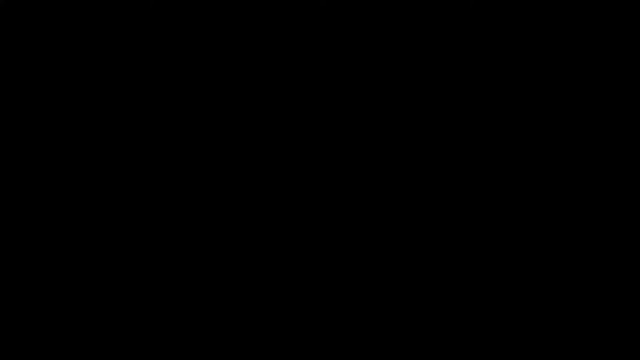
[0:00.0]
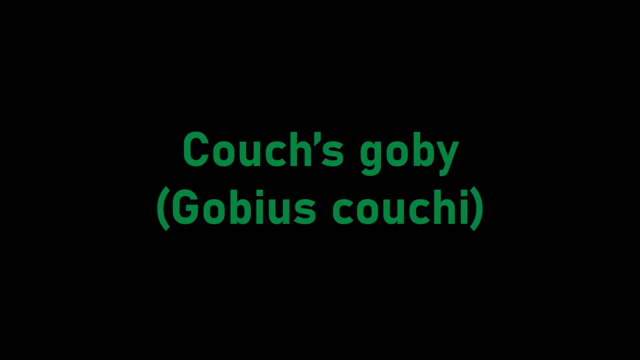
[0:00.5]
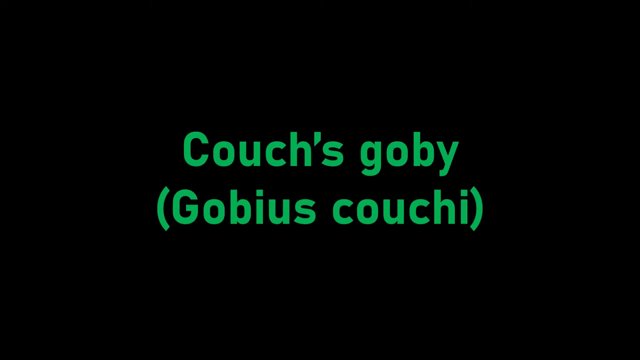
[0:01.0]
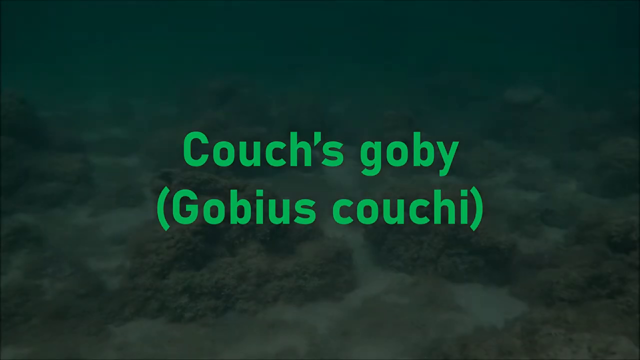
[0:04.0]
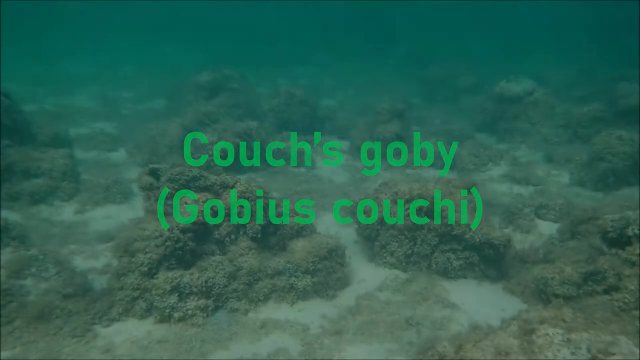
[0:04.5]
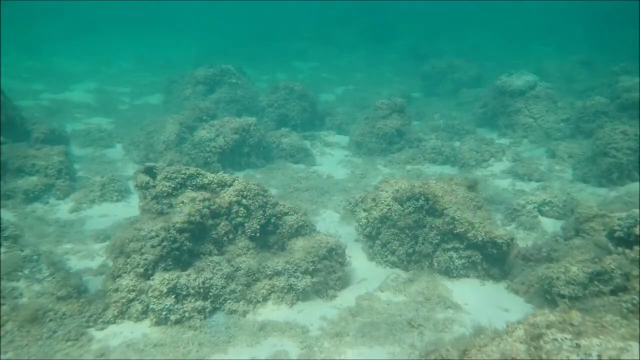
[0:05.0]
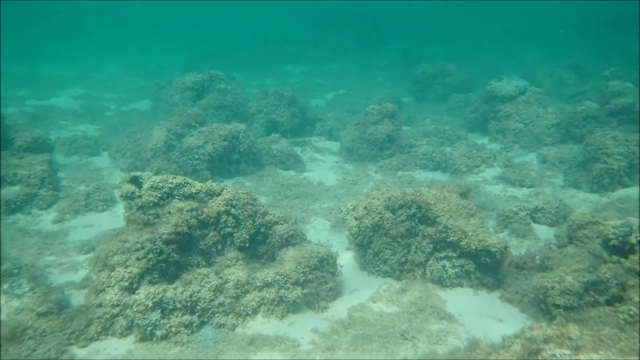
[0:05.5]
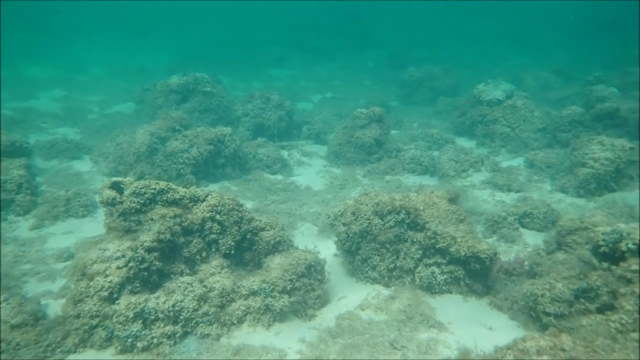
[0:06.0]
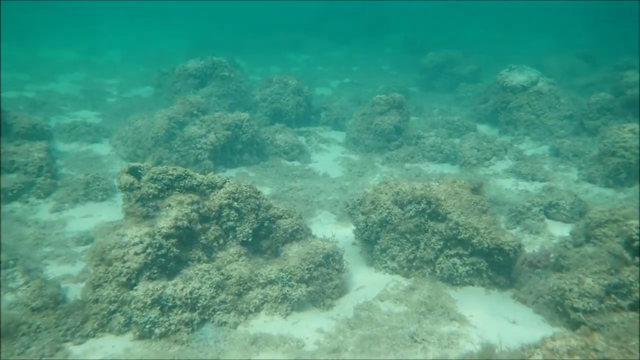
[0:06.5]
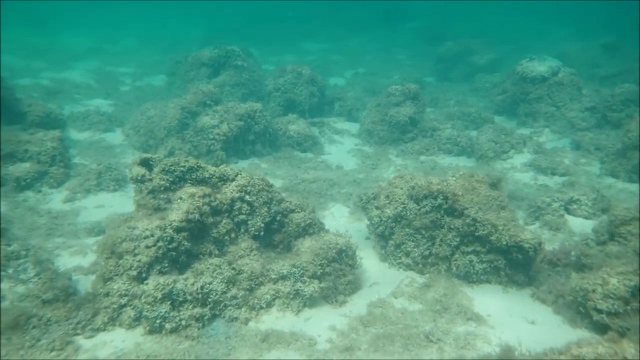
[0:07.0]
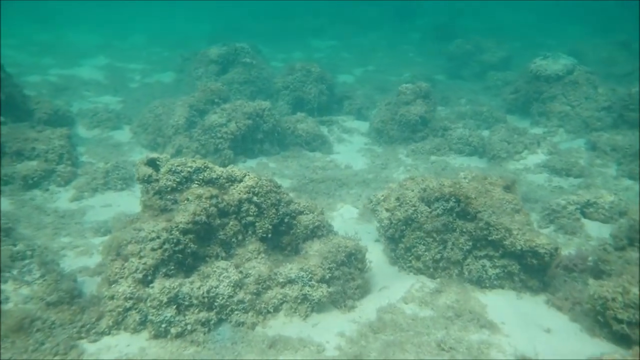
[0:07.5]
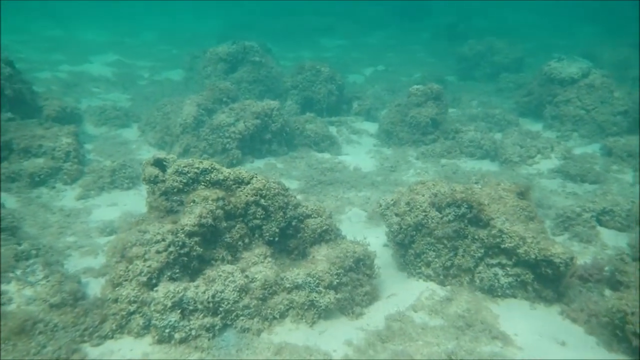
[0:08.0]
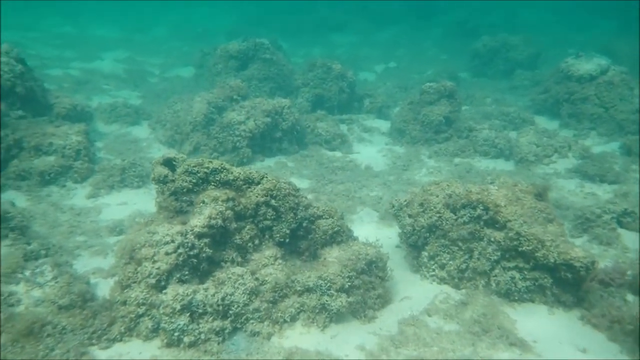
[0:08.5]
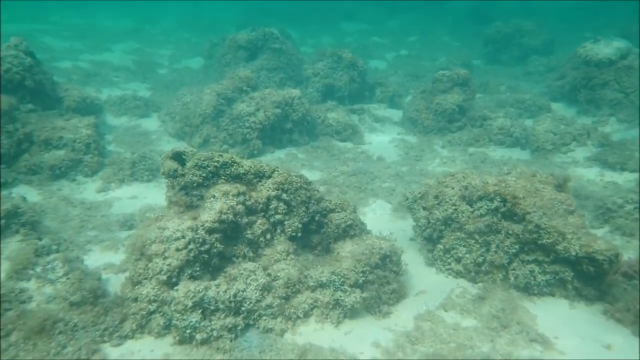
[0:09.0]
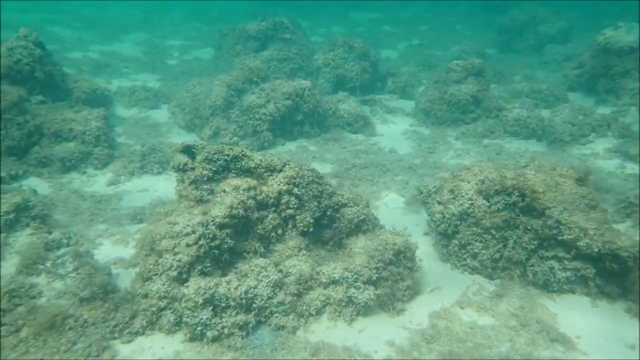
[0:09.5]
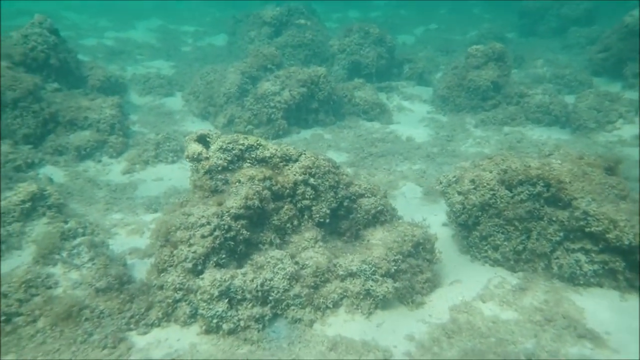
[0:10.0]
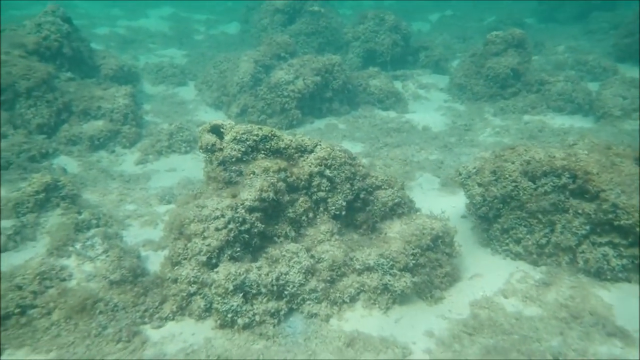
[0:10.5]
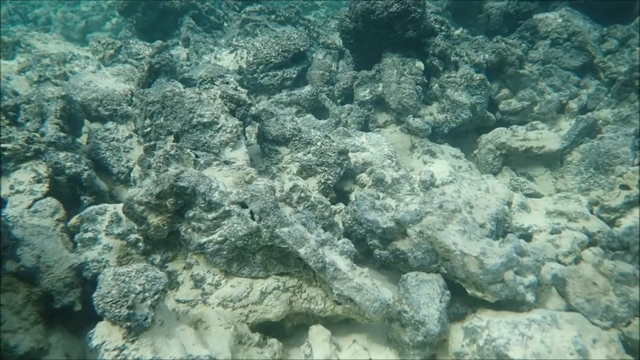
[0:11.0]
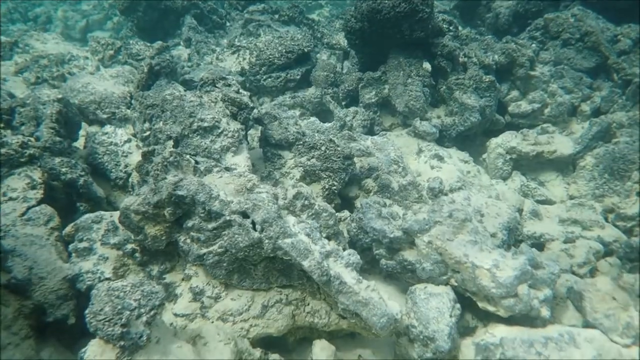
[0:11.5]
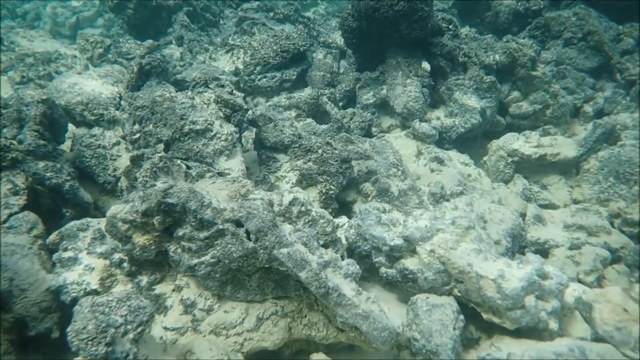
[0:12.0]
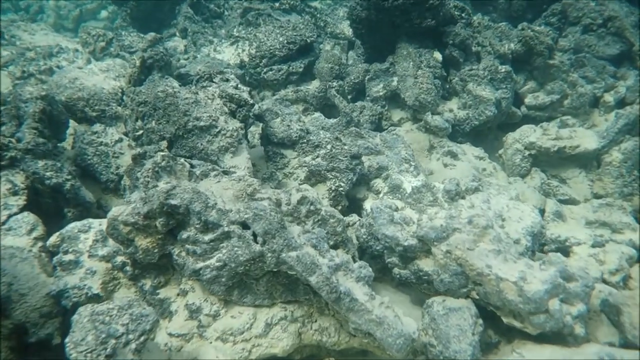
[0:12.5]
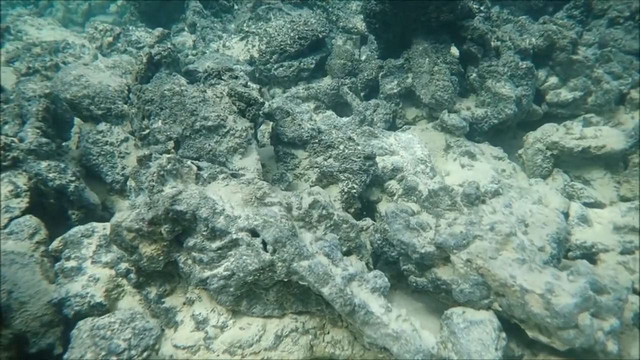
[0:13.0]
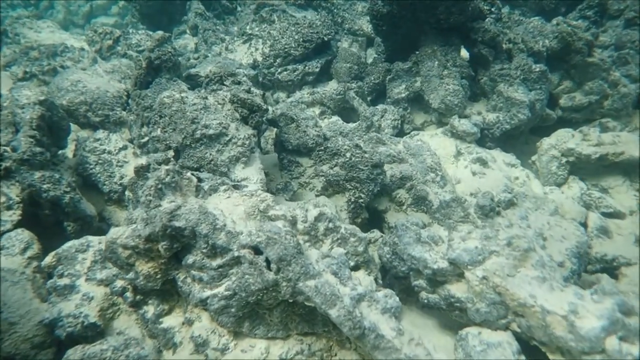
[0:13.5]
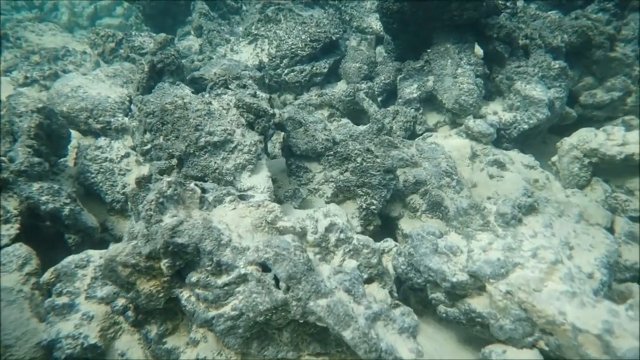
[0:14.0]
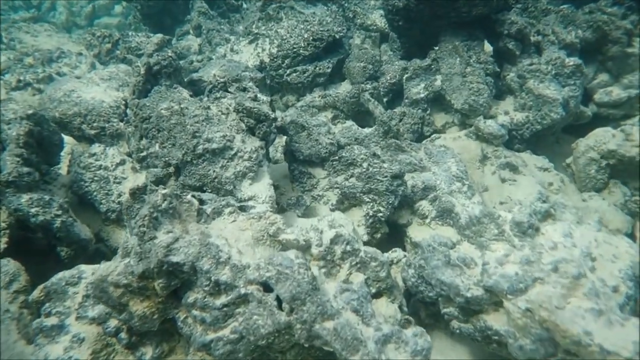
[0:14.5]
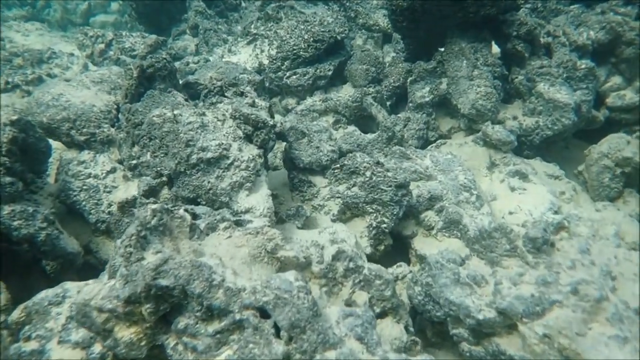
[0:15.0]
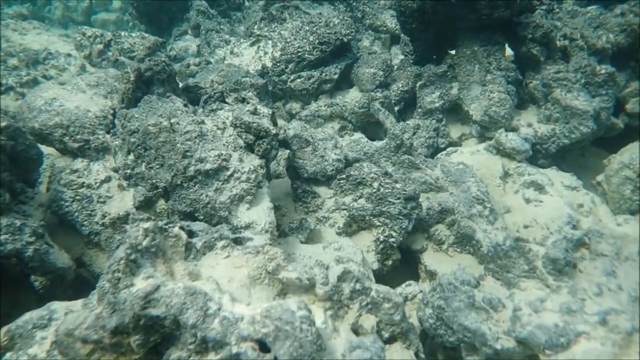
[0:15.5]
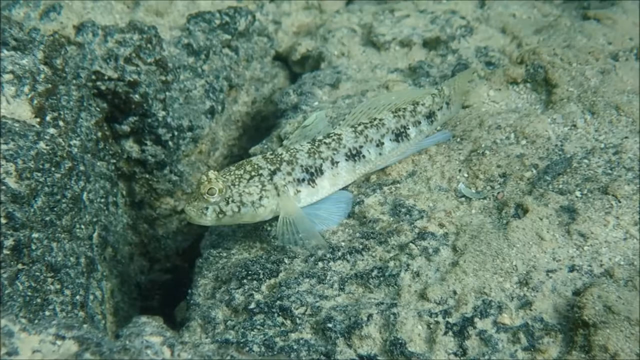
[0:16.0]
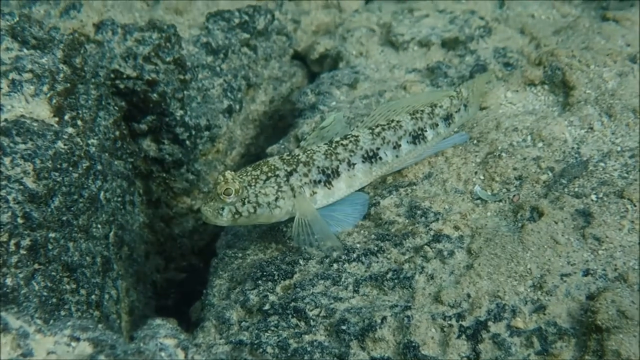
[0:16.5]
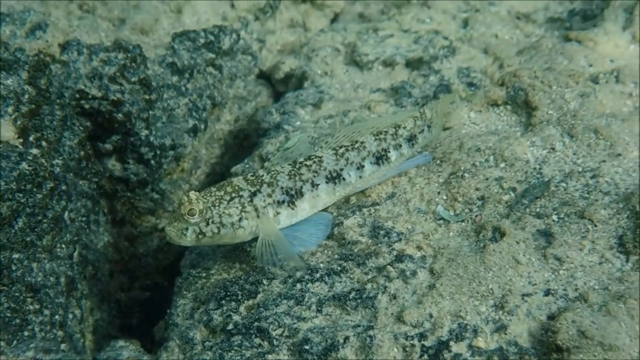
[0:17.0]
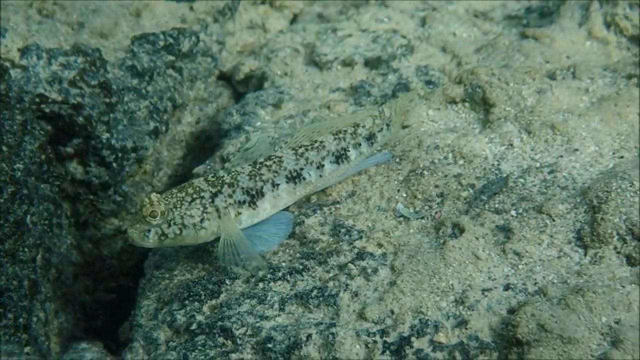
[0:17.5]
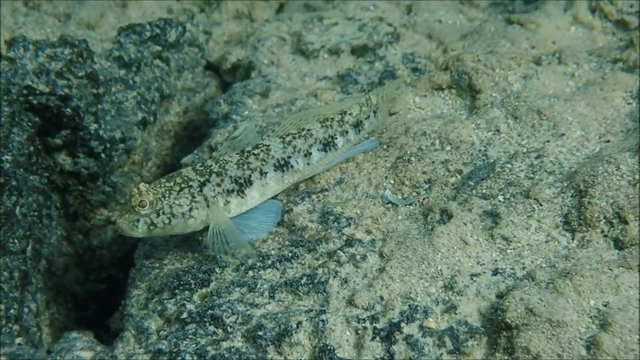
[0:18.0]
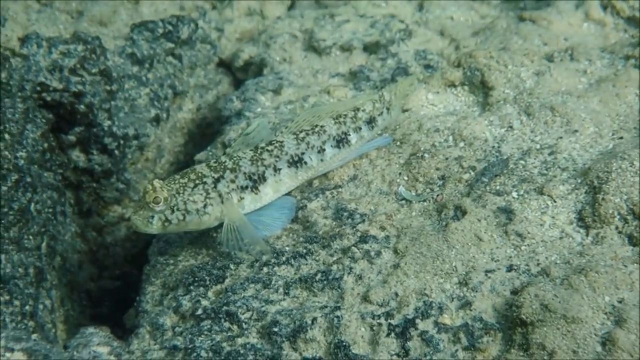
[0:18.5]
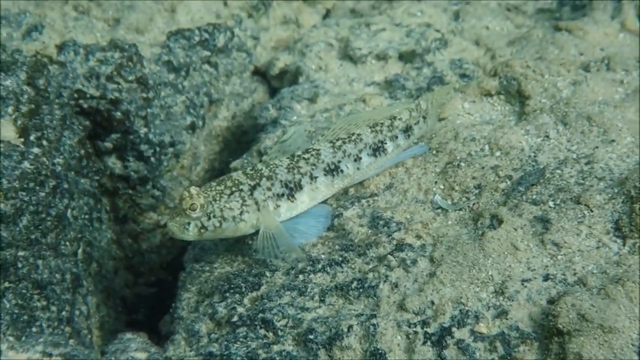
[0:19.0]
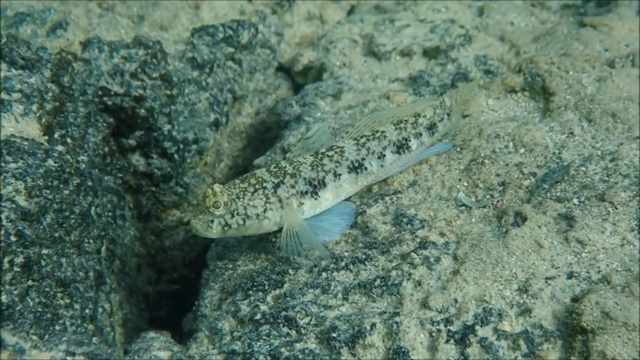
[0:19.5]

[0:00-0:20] The video opens on a black background with medium green text reading "couch's goby" and, in parentheses below it, "gobius couchi". It then transitions to an underwater scene in the ocean, with the camera moving back and forth to show the sand and the ocean floor: reefs, sand, rocks and corals. It is all pretty dry. Most of these structures are very gray or very beige, while the water is very blue, a blue-green. The shot ends on what looks like an animal or fish camouflaged against the reef and the sand. It is black, white and a bit gray, right up against the reef and showing against the sand. It looks somewhat like a snake but has a few fins.